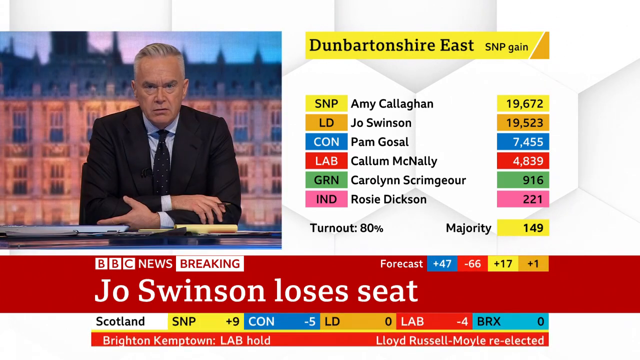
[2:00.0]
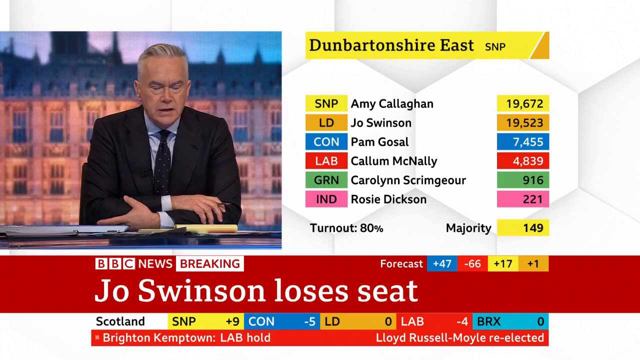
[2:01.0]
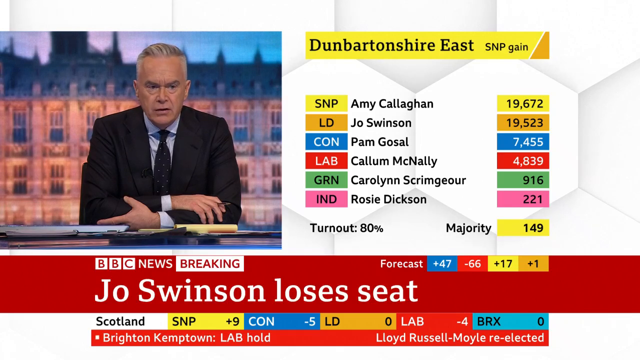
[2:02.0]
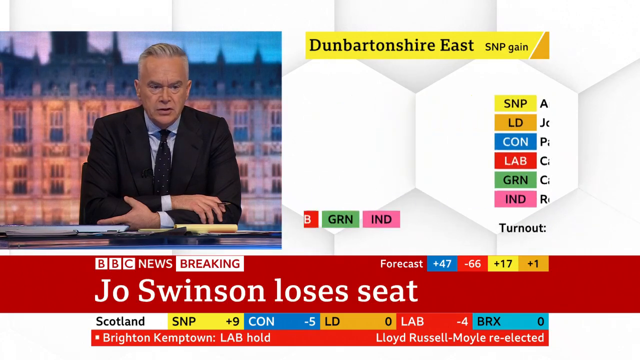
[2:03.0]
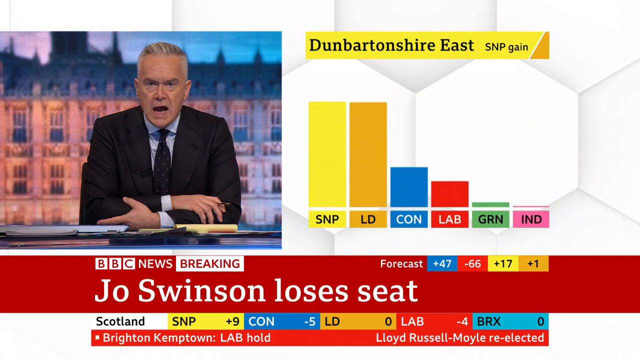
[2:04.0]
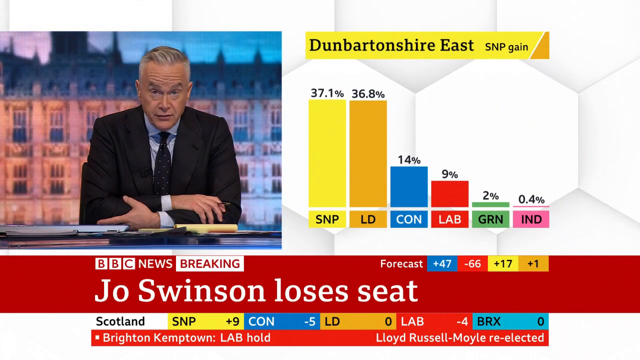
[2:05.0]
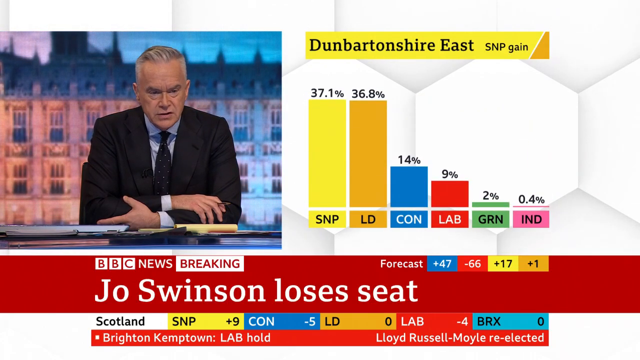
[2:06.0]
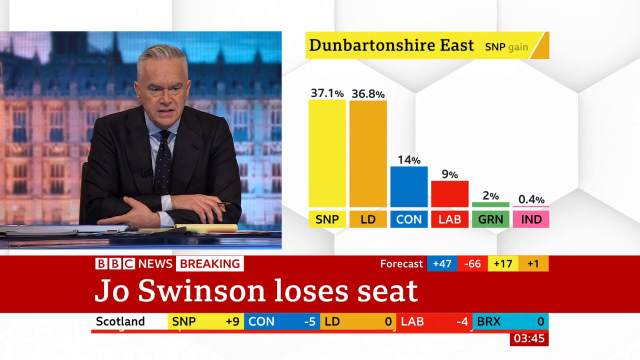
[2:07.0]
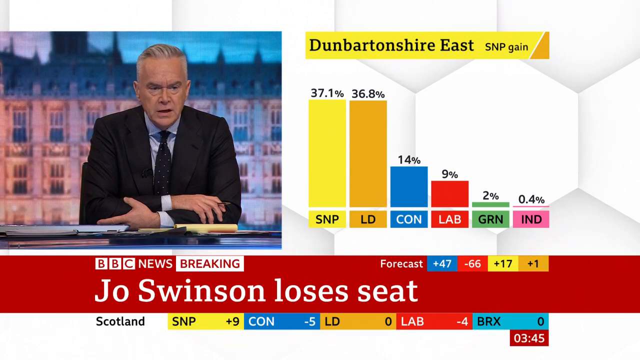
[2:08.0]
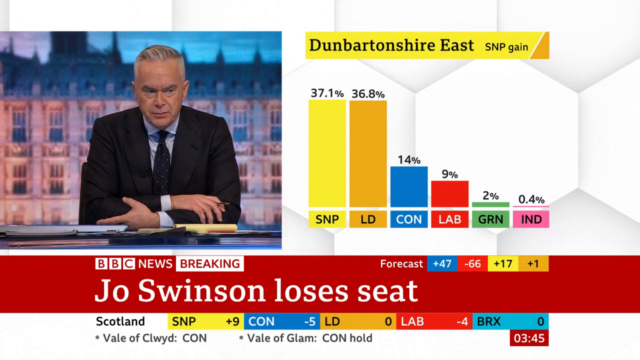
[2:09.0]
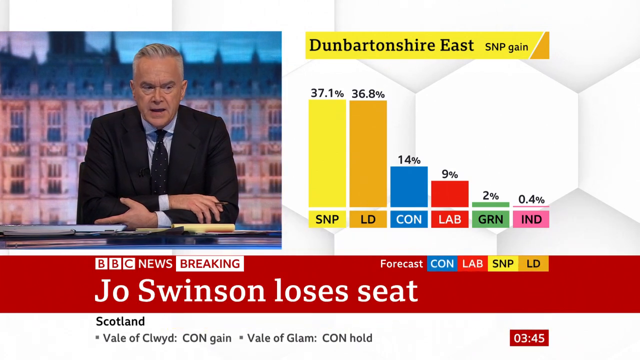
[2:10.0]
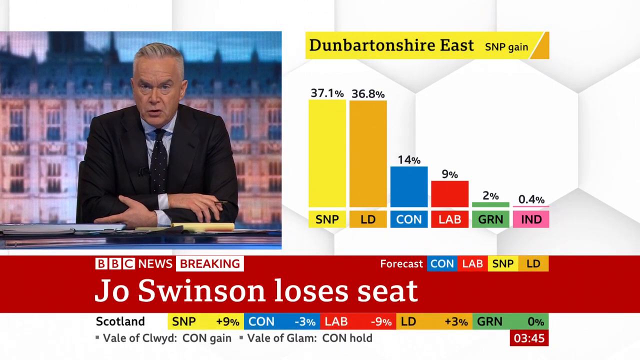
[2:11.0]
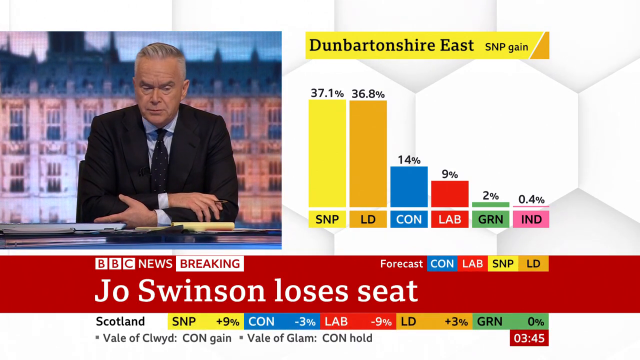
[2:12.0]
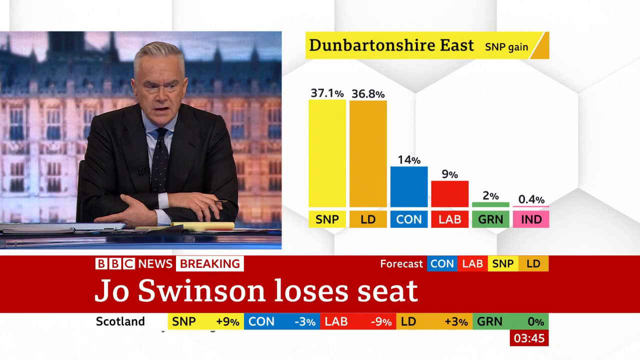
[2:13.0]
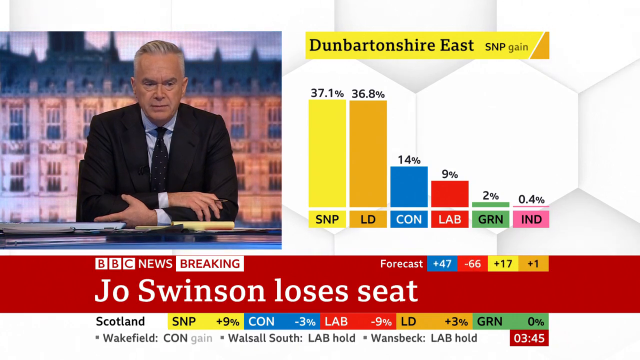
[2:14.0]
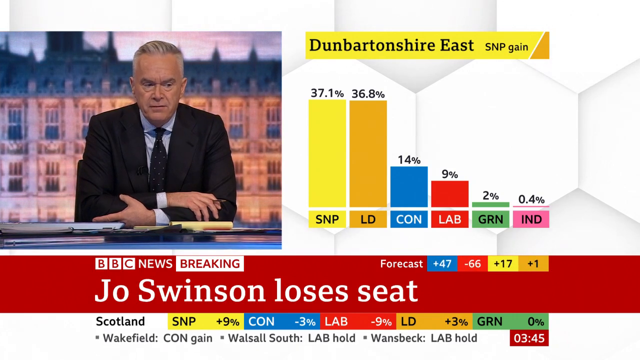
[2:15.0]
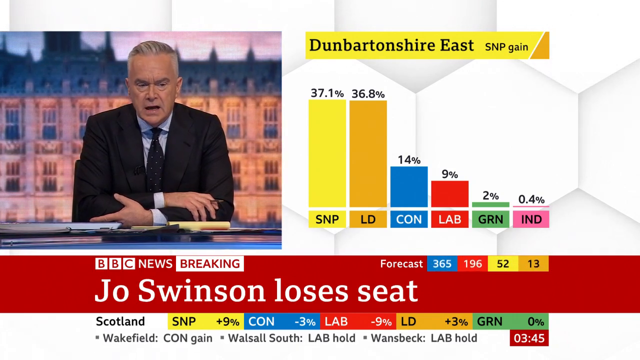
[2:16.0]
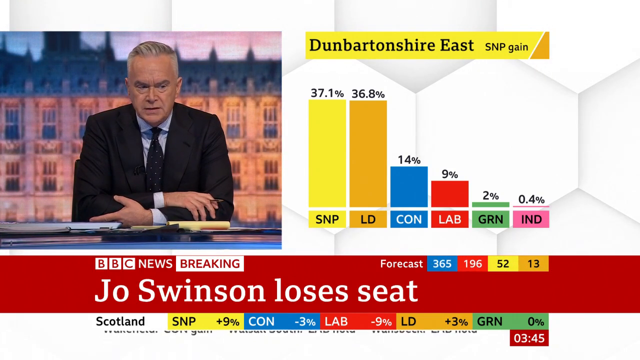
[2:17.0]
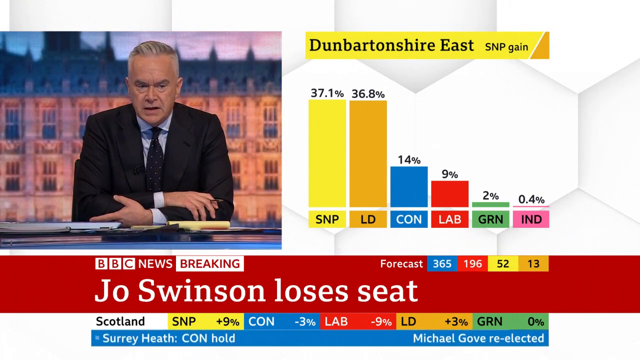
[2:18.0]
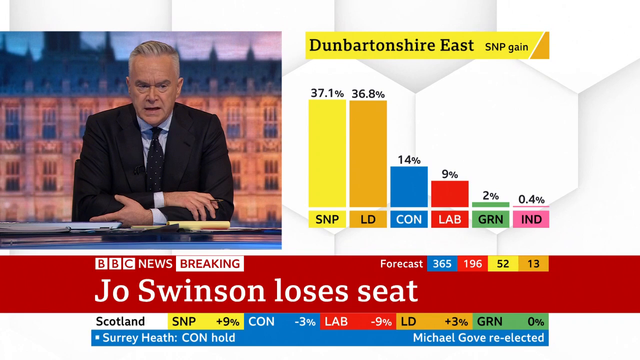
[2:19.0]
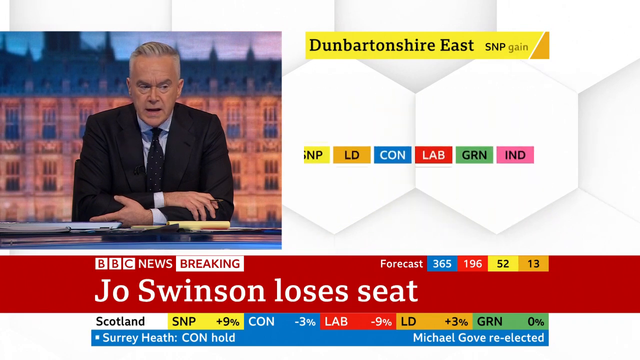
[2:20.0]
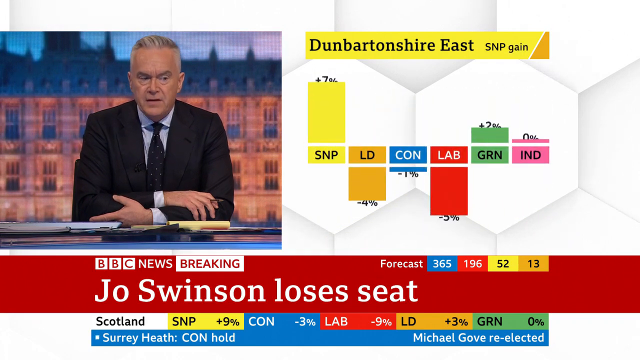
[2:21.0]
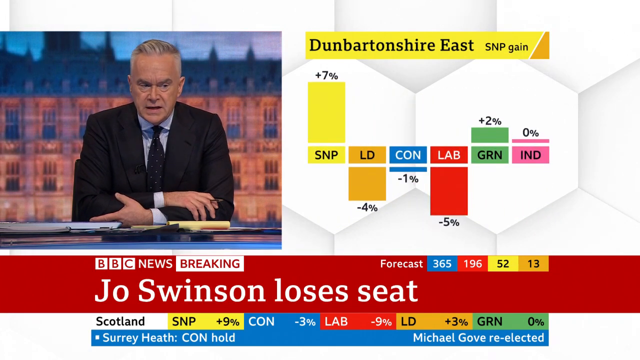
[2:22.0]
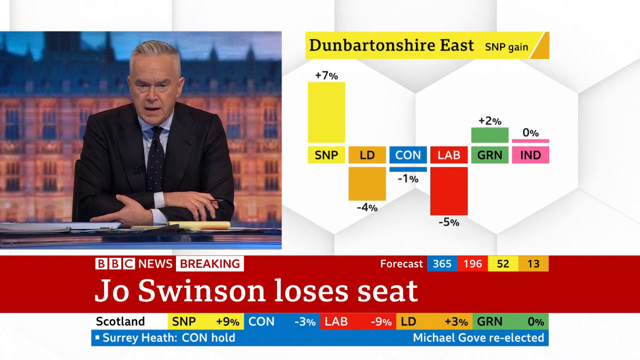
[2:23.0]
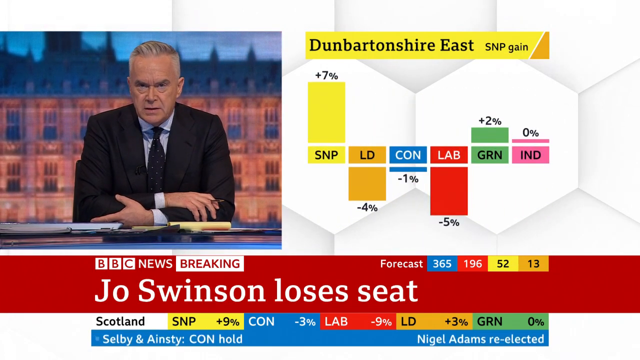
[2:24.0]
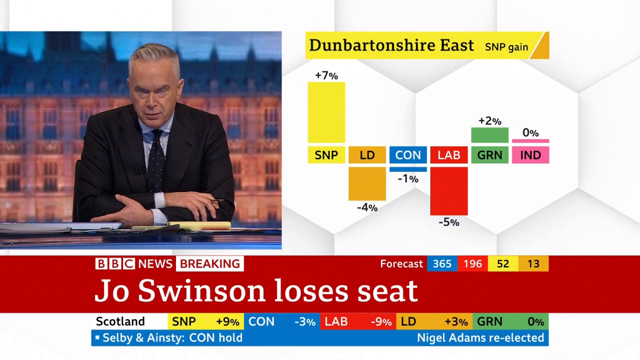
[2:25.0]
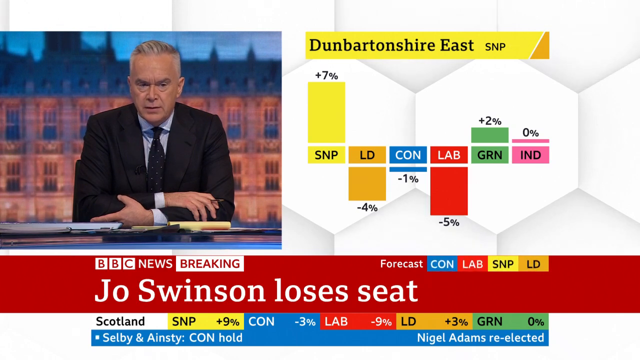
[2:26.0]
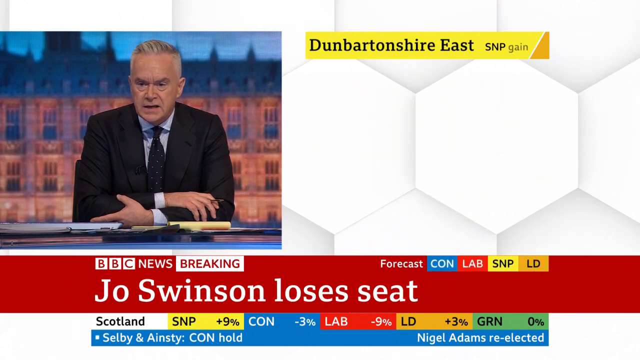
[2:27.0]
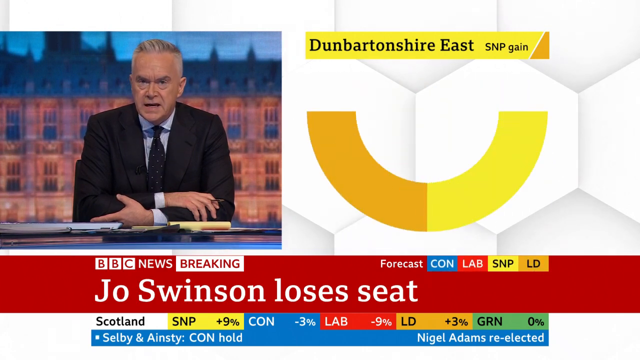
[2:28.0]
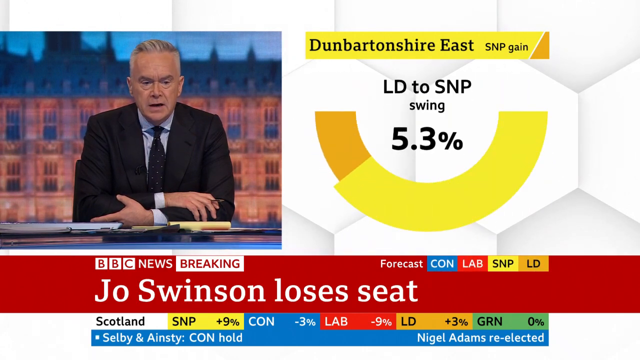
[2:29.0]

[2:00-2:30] A newscaster is shown in front of an ornate, parliament-like building. A banner to the right reads "Dunbarton East SNP gain", and beneath it a bar graph shows yellow SNP at 37.1%, LD at 36.8%, CON at 14%, LAB at 9%, GRN at 2% and IND at 0.4%. A forecast shows blue +47, red -66, yellow +17 and gold +1, and the forecast at the bottom also shows blue 365, red 196, yellow 52 and gold 13. Another Dunbartonshire East bar graph shows SNP +7, LD -4, CON -1, LAB -5, GRN +2 and IND 0%, probably changes from the previous election.